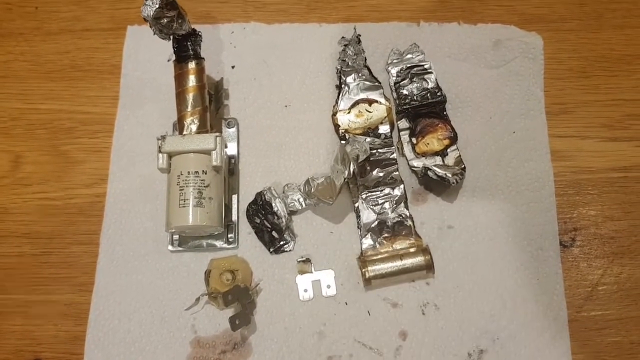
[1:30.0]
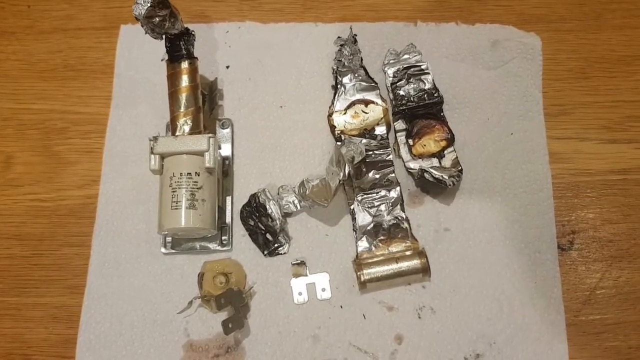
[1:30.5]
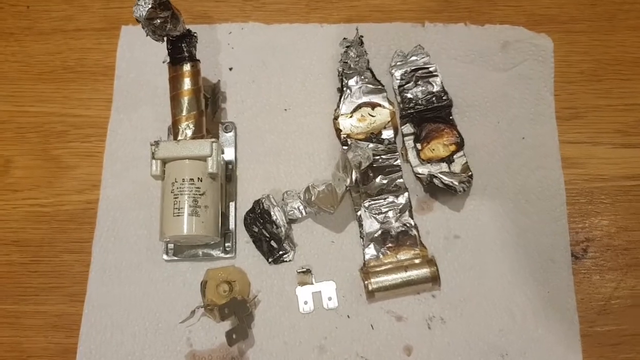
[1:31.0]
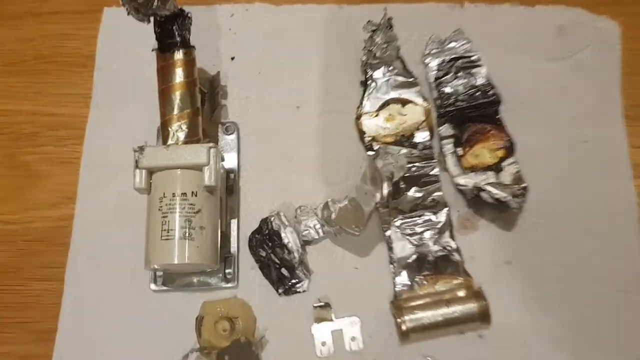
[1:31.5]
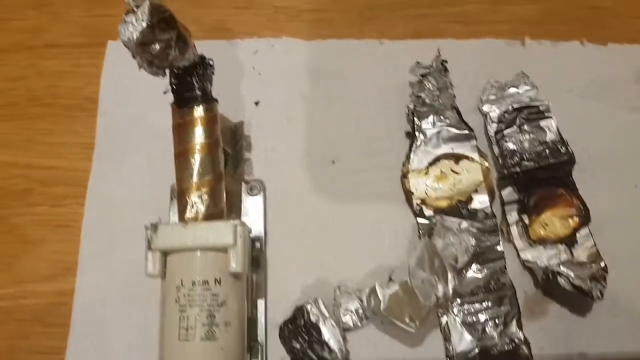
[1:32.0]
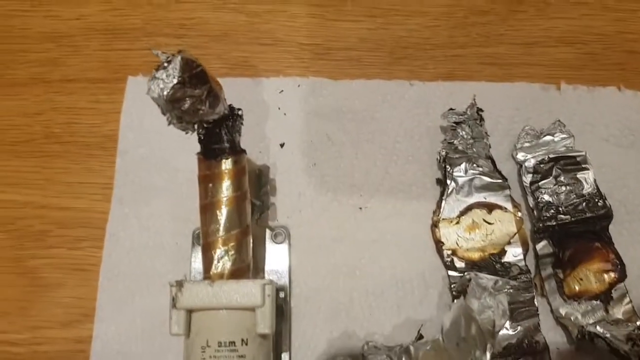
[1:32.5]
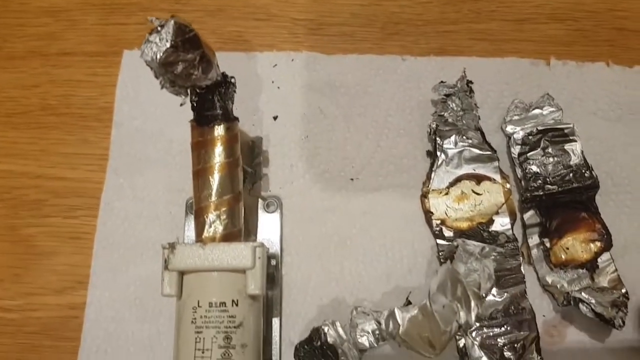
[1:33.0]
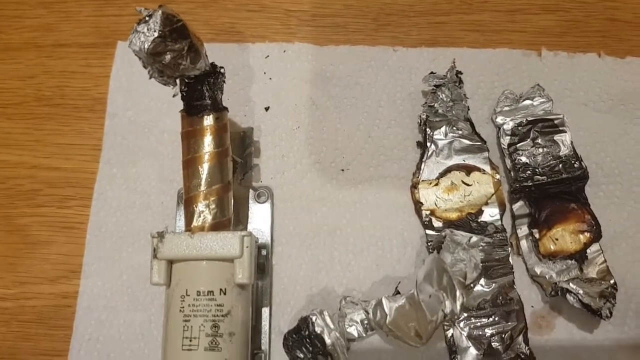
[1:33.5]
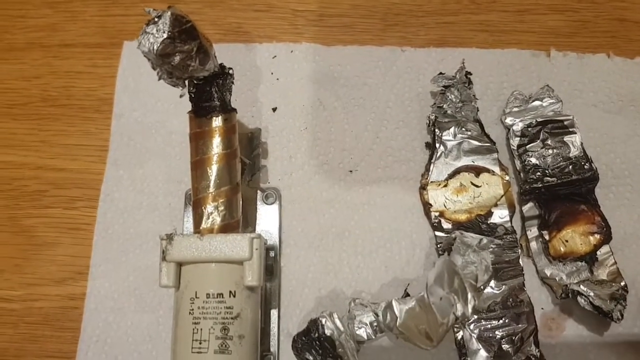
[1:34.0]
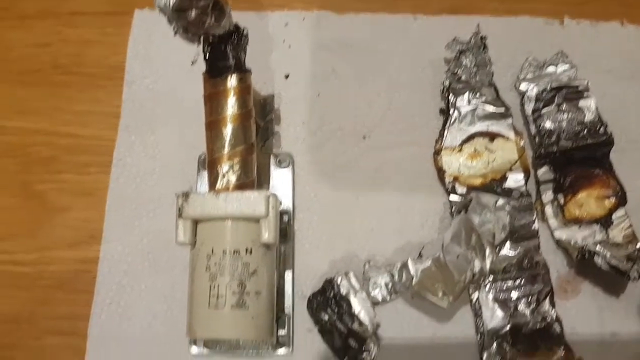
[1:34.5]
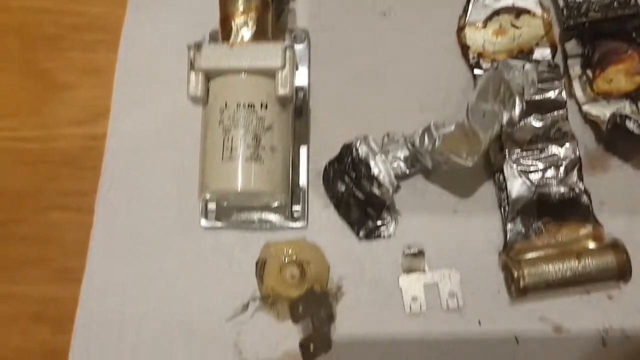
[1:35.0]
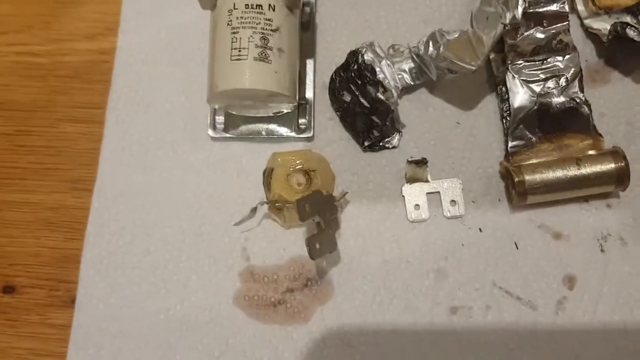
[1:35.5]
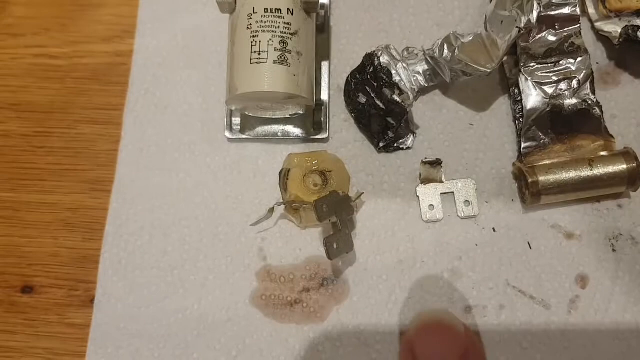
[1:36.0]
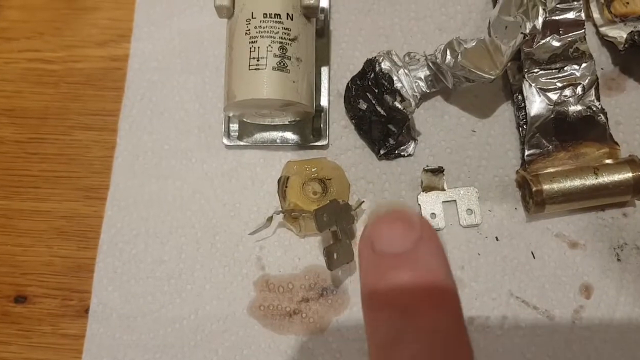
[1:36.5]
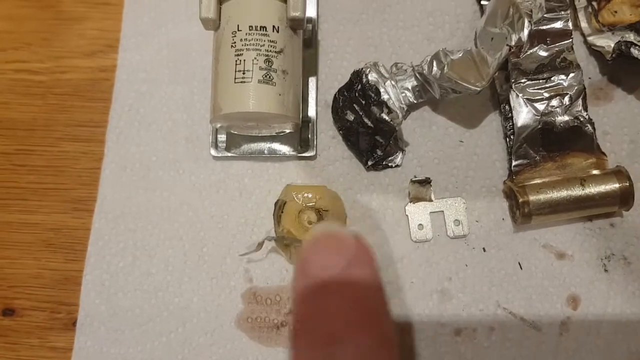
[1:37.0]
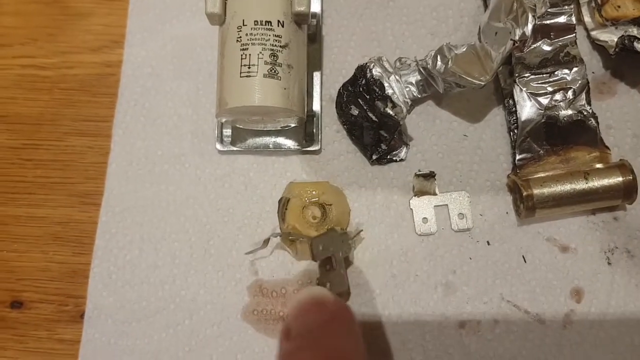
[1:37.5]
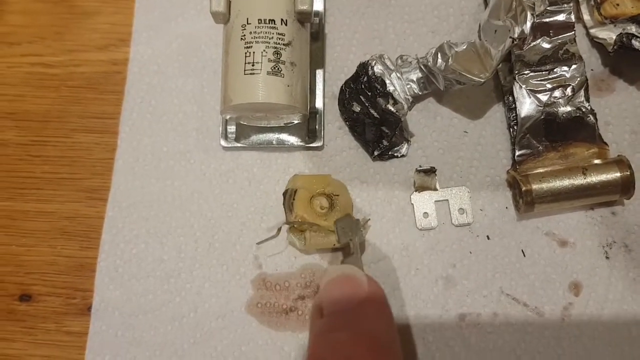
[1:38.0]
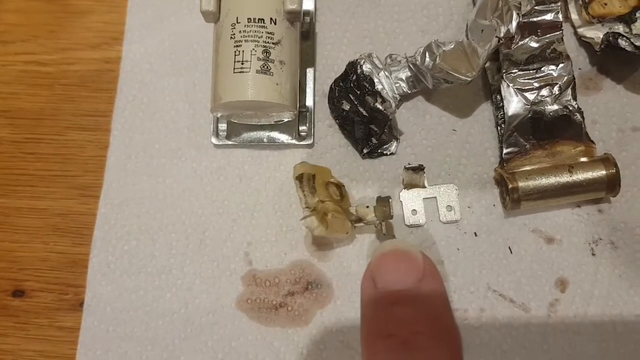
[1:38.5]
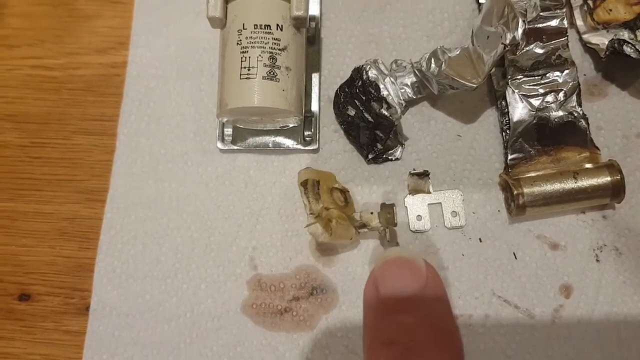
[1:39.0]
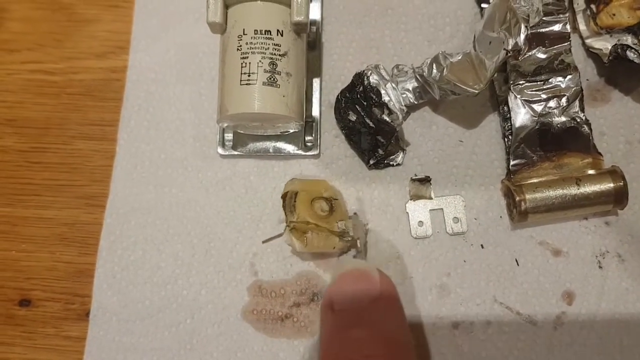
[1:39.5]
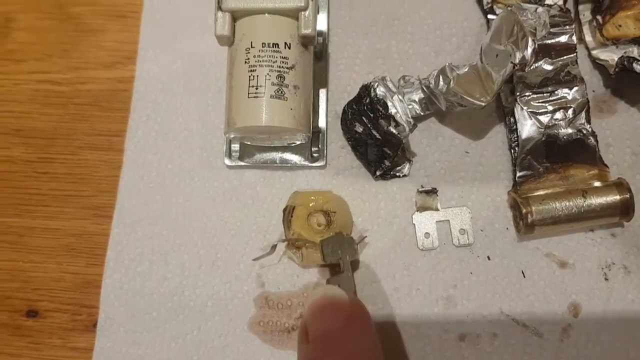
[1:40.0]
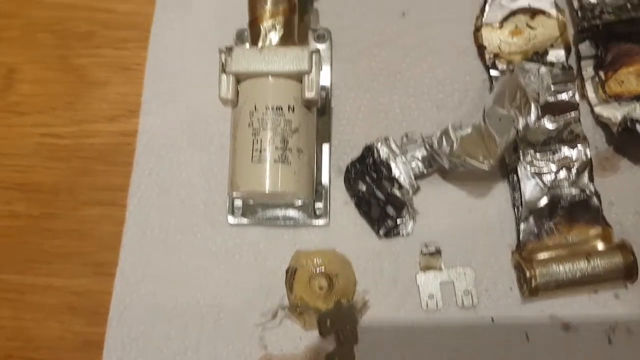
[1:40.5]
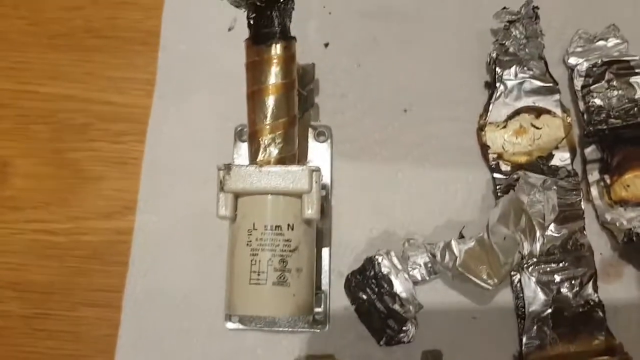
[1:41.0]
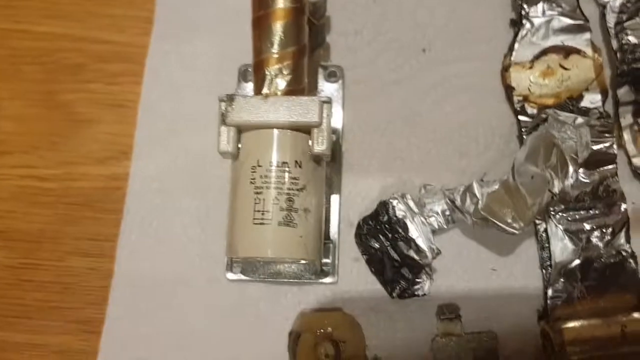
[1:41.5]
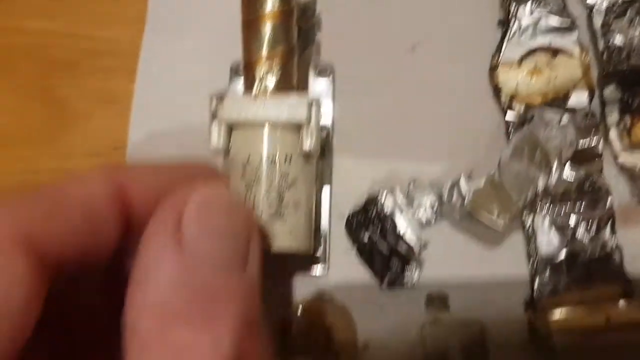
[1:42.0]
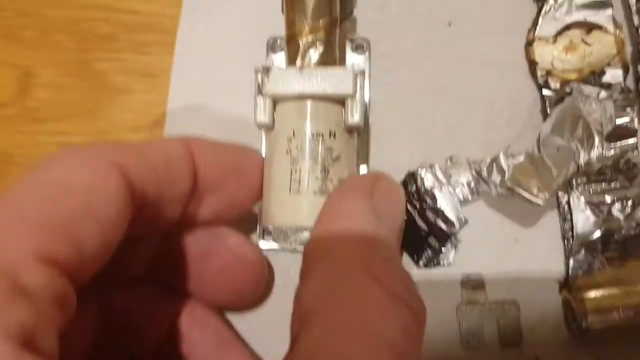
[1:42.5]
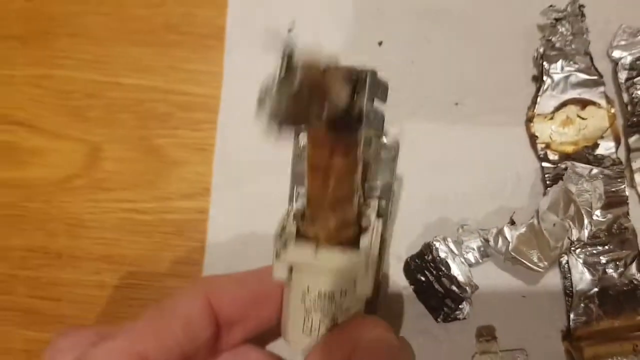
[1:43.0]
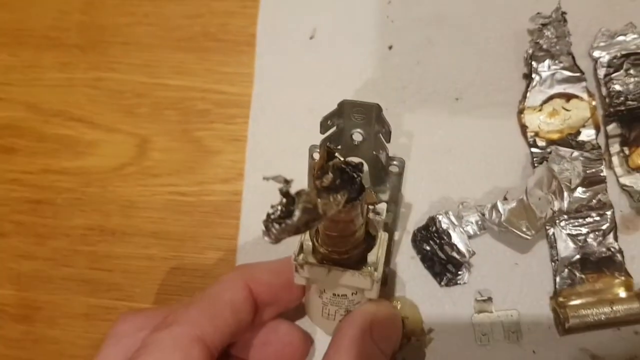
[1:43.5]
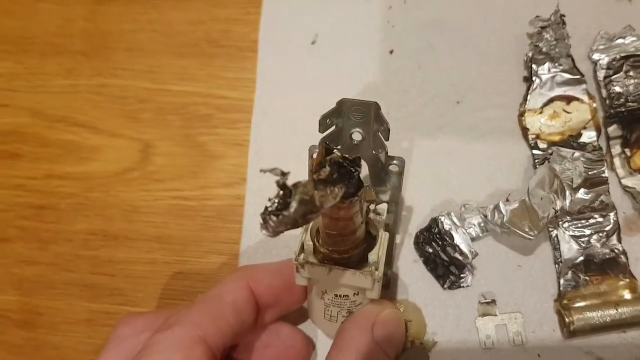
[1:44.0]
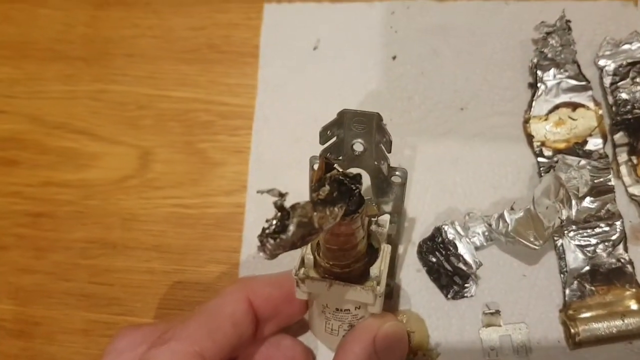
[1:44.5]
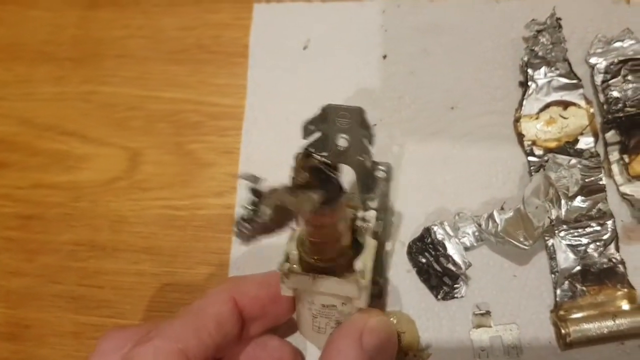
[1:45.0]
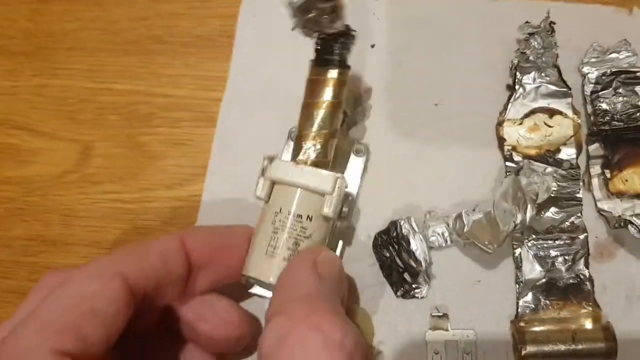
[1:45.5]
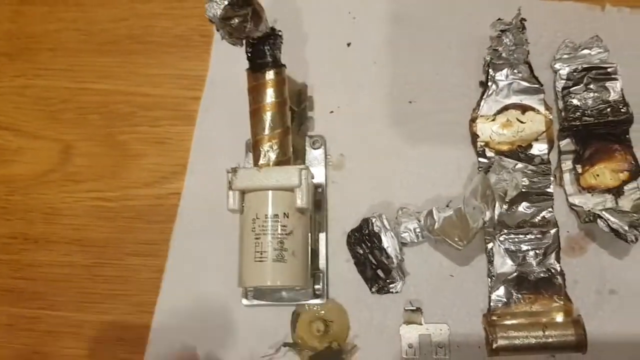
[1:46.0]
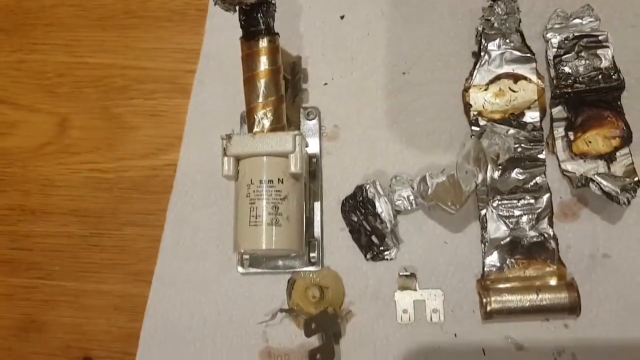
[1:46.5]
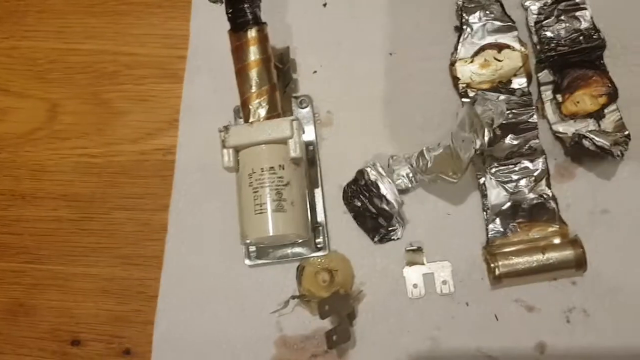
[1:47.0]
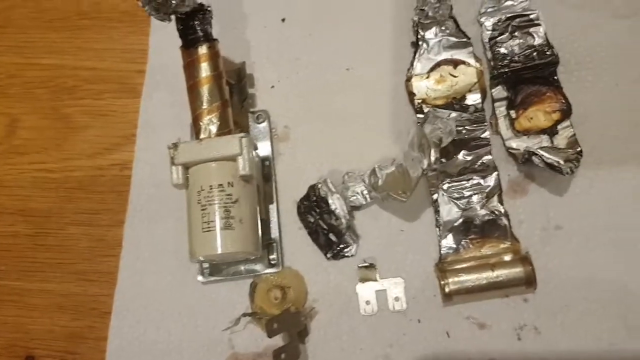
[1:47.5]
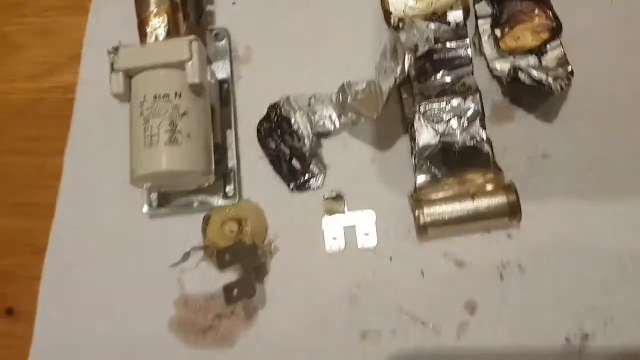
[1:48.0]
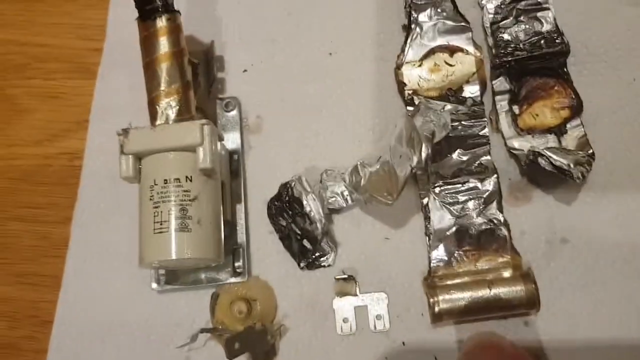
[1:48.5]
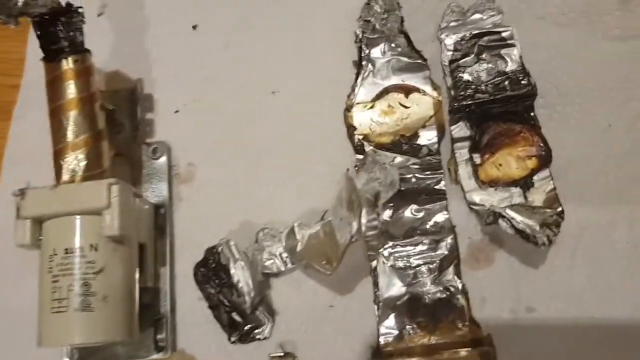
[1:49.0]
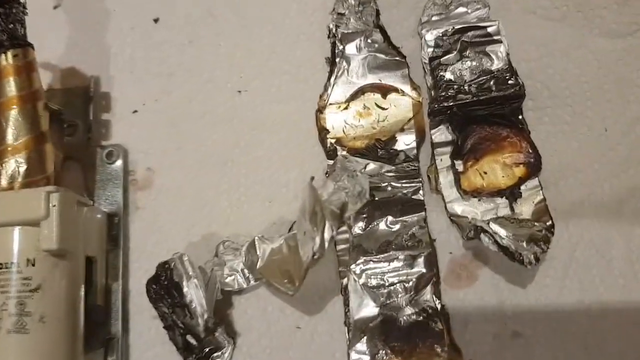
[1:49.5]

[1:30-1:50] The parts are still shown: a cylinder piece with a bronze section coming out of it, two misshapen parts that look like they are covered in foil, a little bracket of some sort, and at the bottom a round component with a u-shaped bracket attached to it. The camera, not very steady, zooms in on the cylinder piece, then moves down to the circular component. The person puts a finger on the bracket and turns it to show both sides, then the camera goes back up to the cylinder. The person picks up the little cylinder piece, shows its top, and lays it back down. The camera then moves over to the two foil-covered pieces and zooms in a little on them.